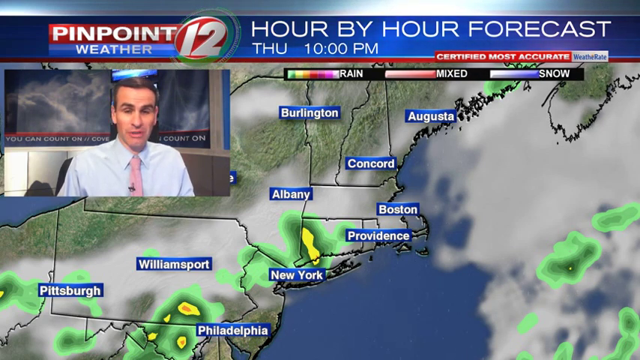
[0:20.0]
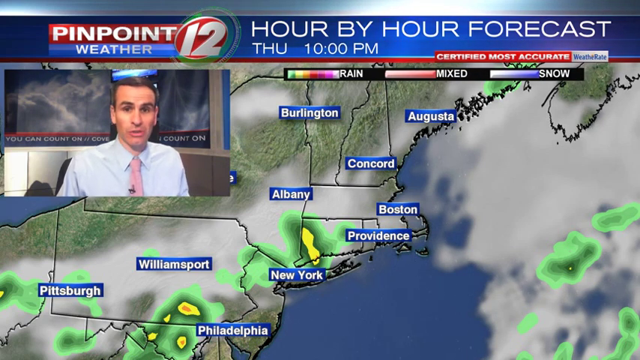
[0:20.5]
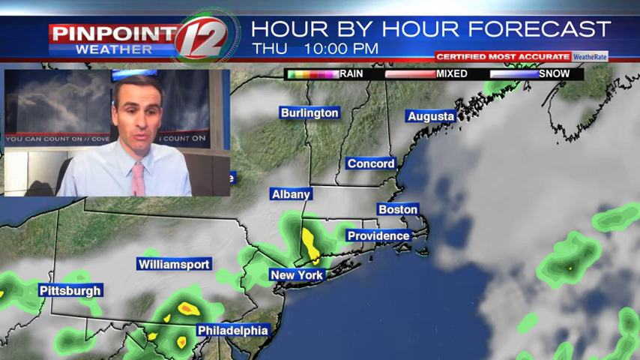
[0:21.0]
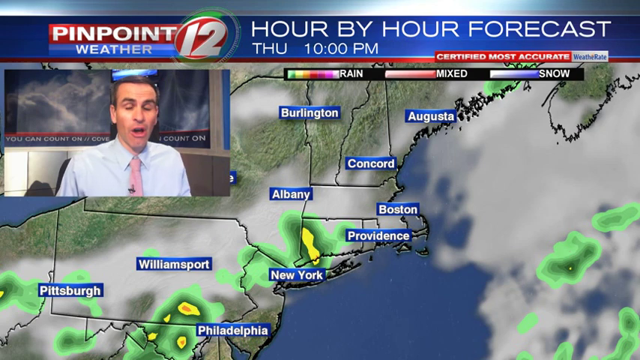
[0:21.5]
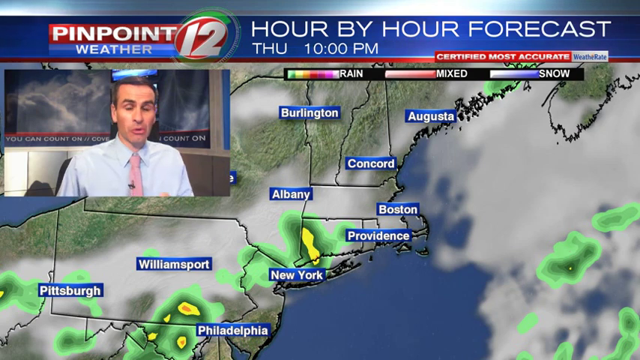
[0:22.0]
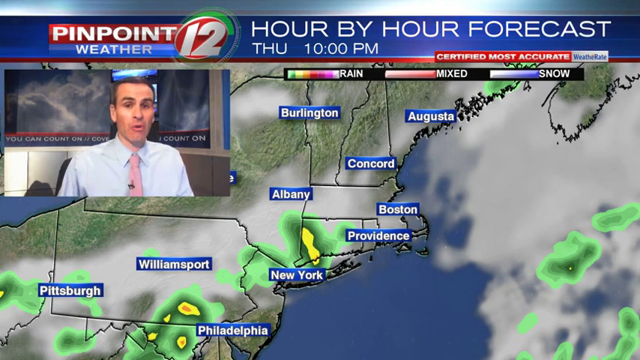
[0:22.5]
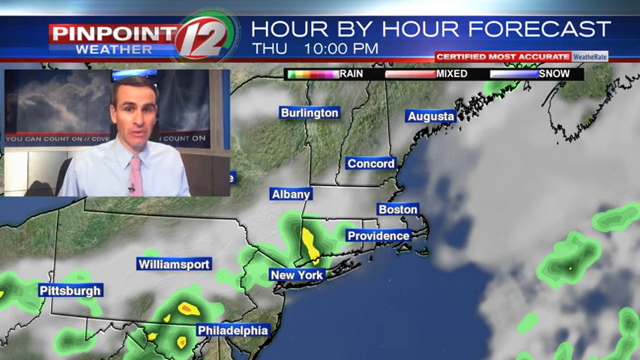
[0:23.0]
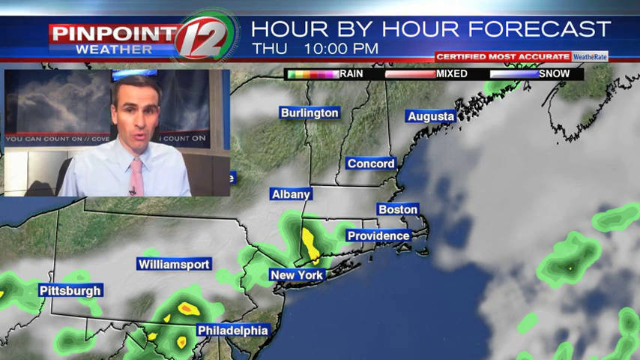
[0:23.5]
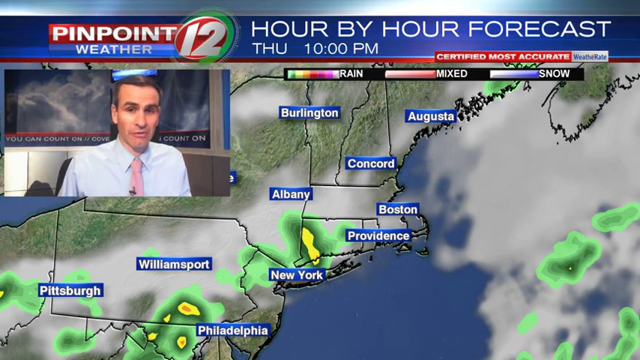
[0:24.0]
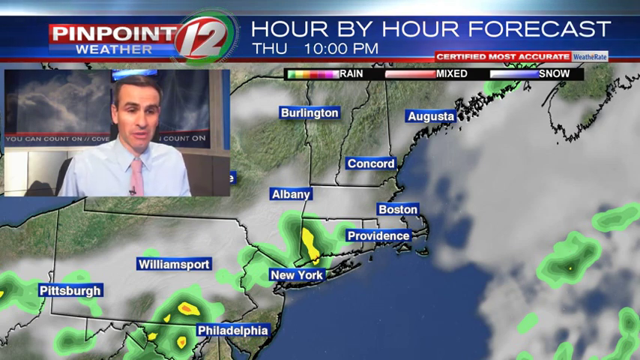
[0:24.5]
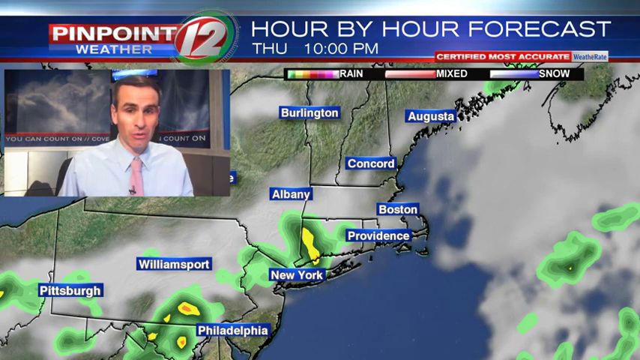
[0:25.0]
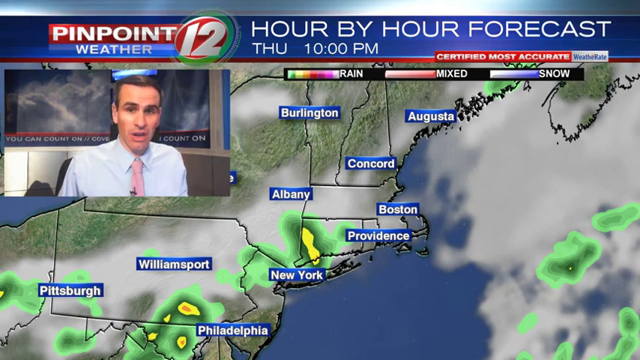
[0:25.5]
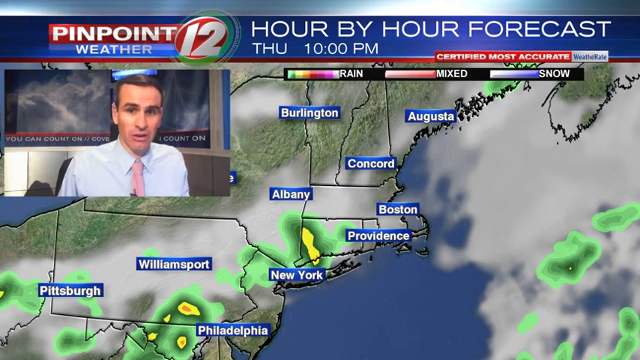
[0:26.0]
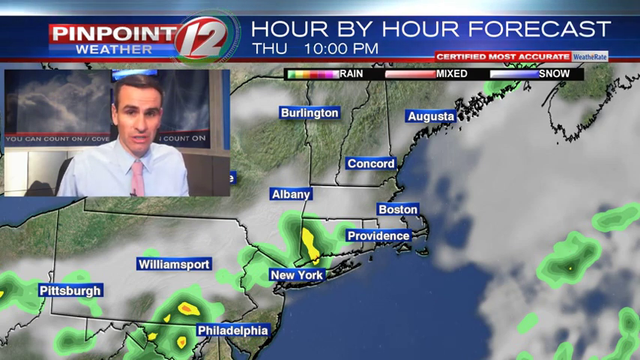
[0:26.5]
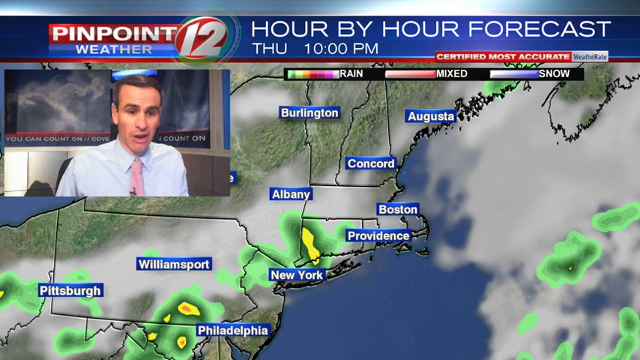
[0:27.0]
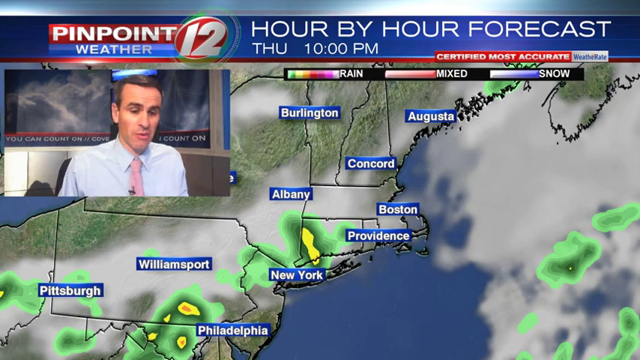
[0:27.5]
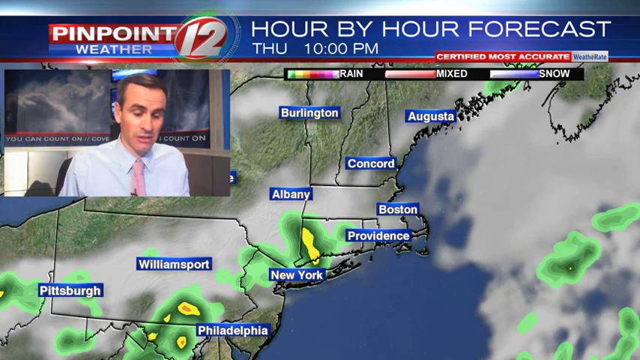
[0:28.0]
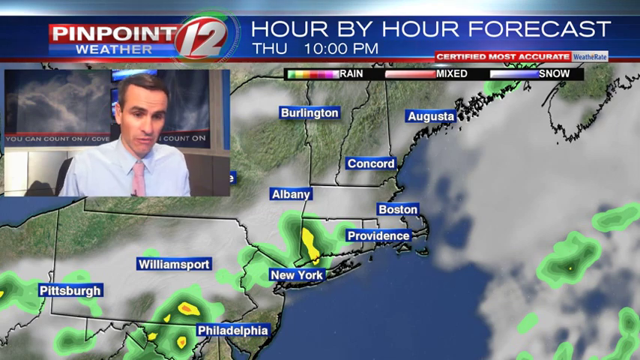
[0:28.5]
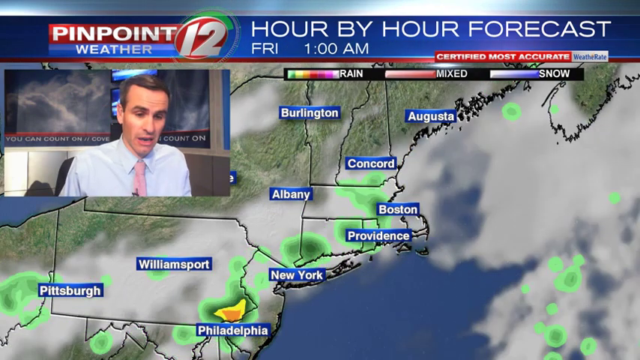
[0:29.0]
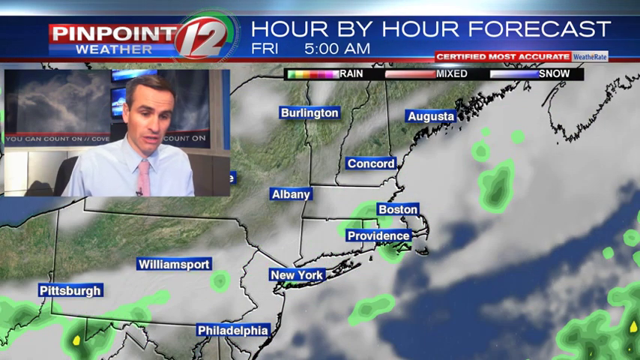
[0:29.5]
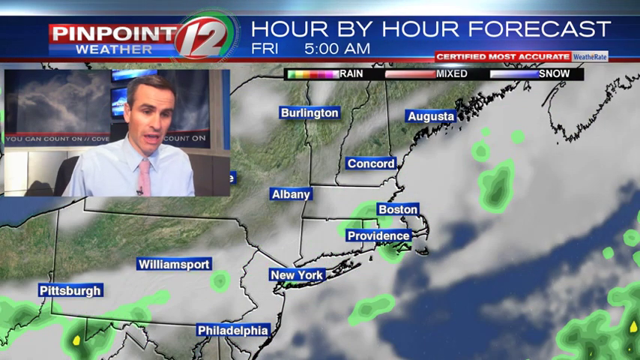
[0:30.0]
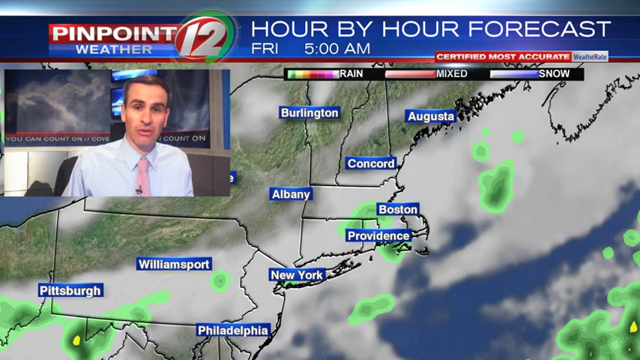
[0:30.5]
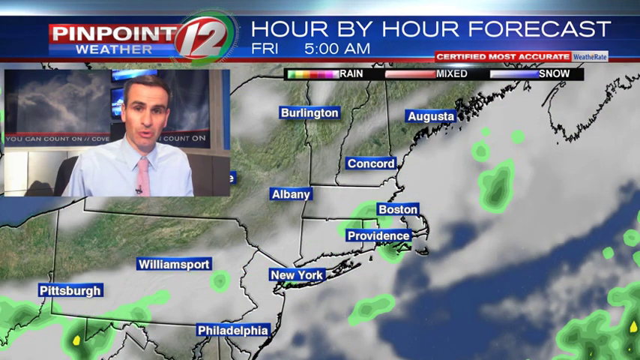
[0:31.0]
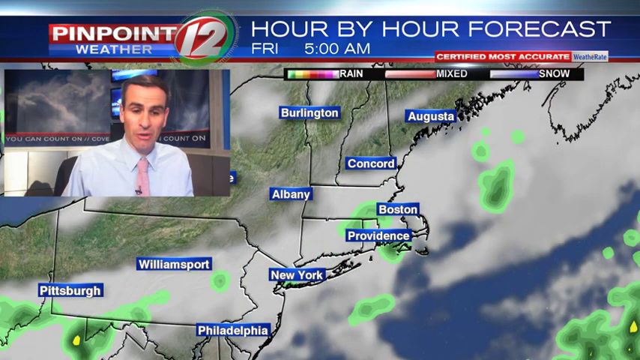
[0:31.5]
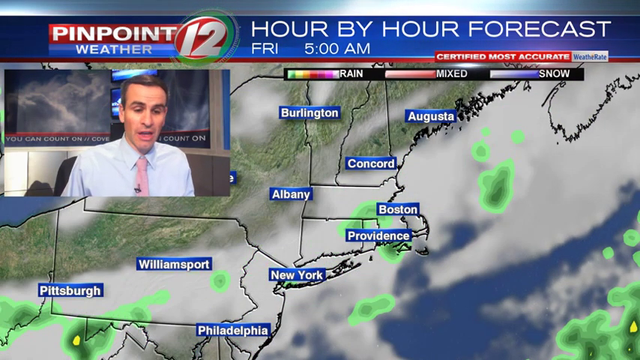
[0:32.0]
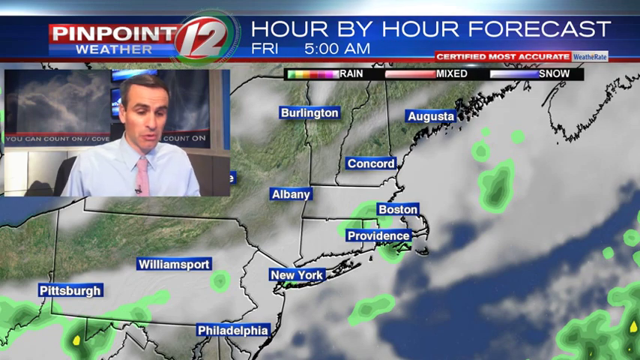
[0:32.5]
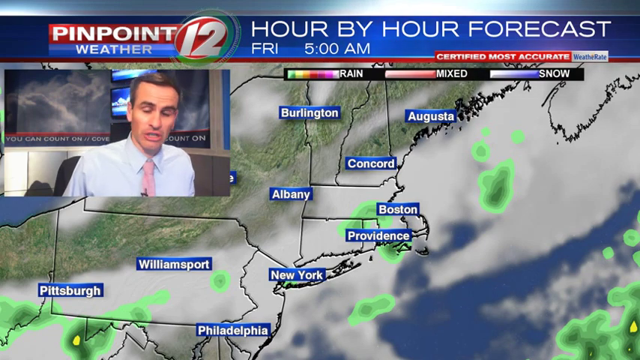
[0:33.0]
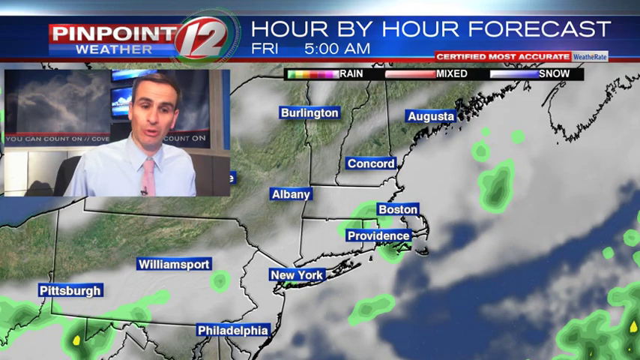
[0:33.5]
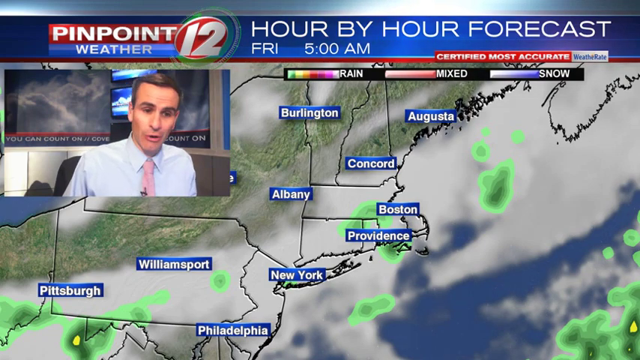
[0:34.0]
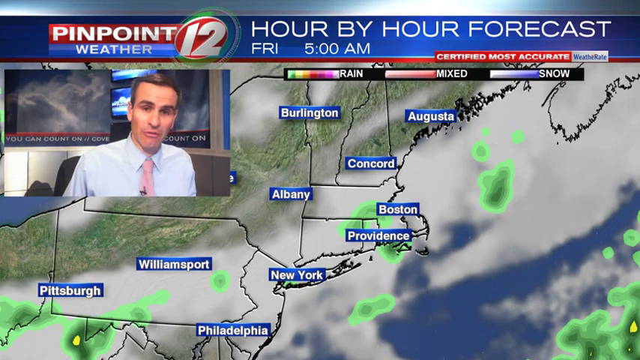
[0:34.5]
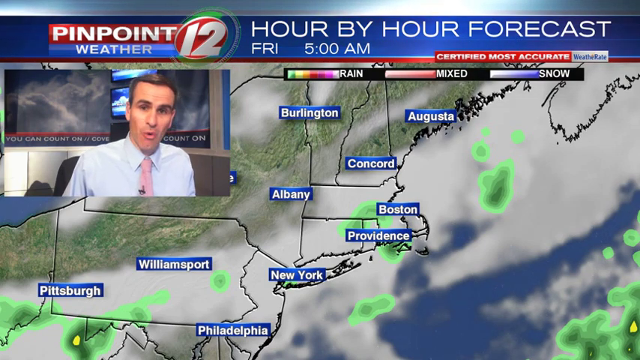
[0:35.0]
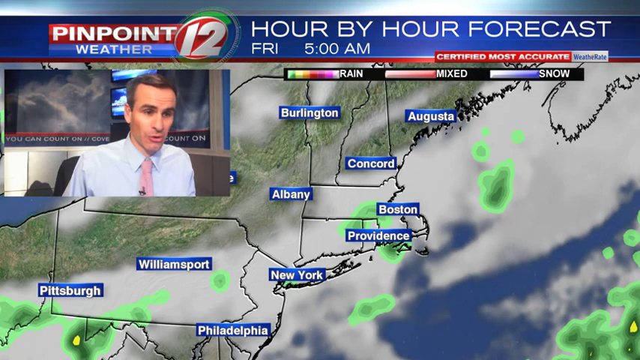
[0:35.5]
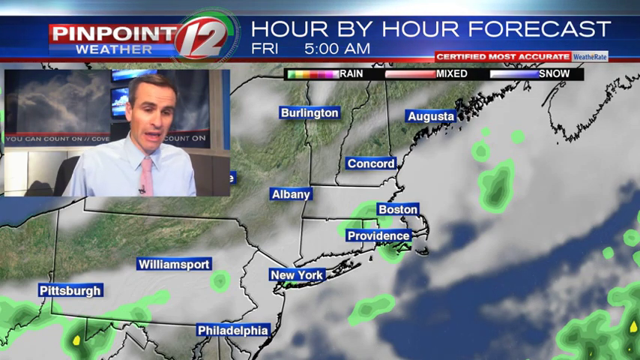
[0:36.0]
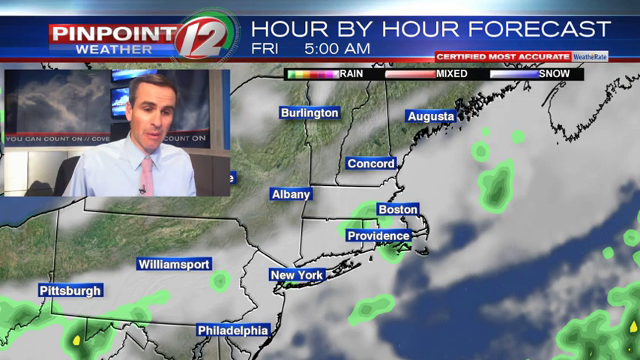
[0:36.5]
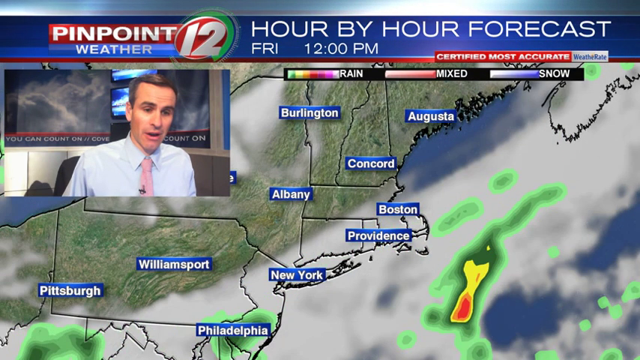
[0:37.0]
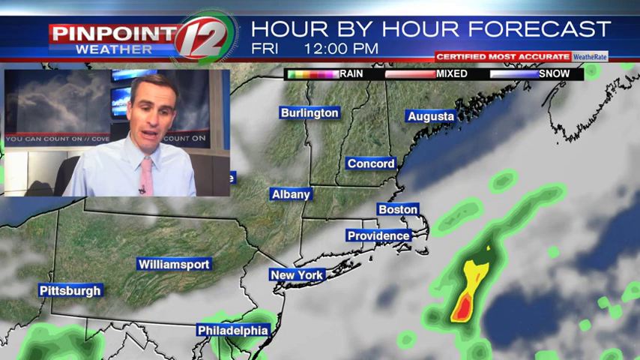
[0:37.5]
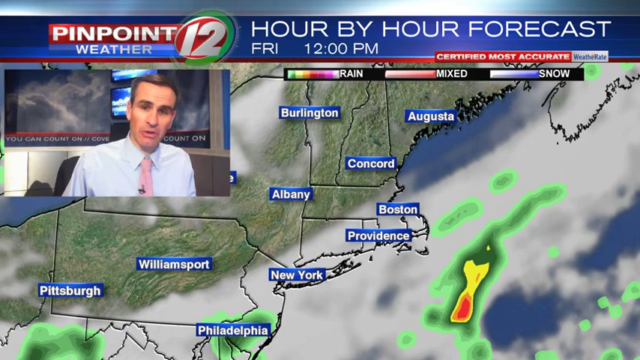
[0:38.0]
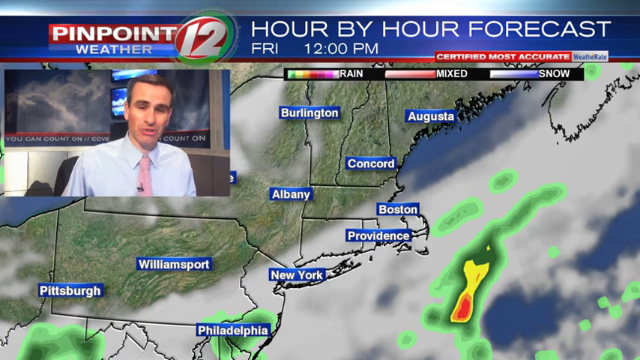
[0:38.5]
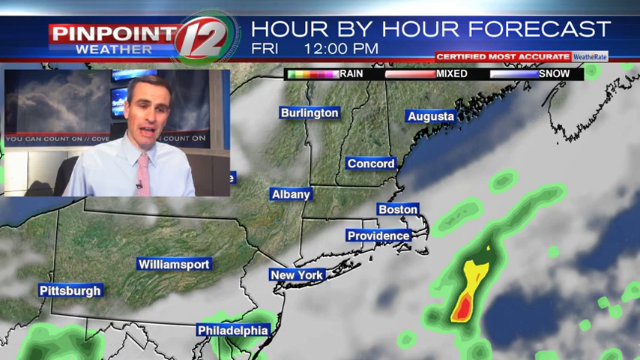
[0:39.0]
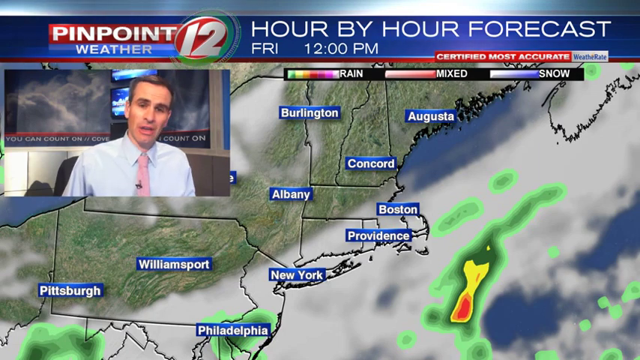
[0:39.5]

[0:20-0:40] The map has clouds on top of it and green patches. On the left side of the frame, a video feed shows a man with short gray hair wearing a light-colored button-down shirt and a pink tie. He appears to be speaking directly to the camera, though his eyes move down toward his left and then flip back to the camera. He appears to be sitting in an office chair. He repeatedly looks down to the left and back to the camera, at one point looking down to the left for a slightly prolonged period before looking back, and he continues to do this. While he speaks, the map remains static, but at certain points the clouds and green patches move and pause, move and pause.